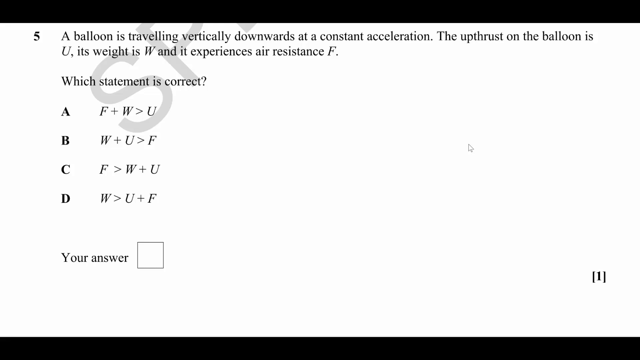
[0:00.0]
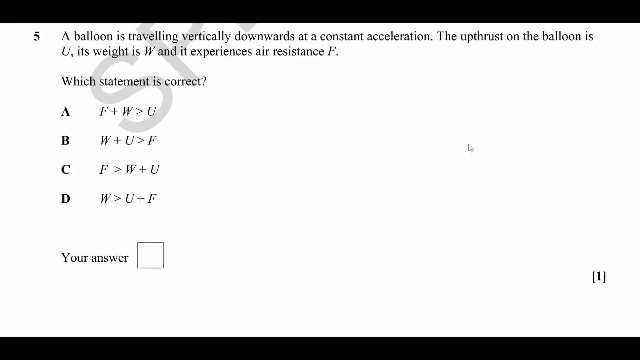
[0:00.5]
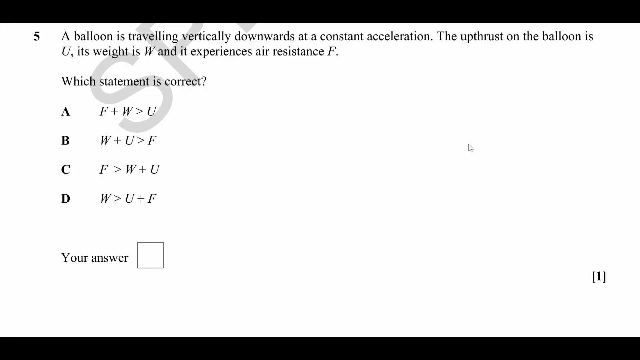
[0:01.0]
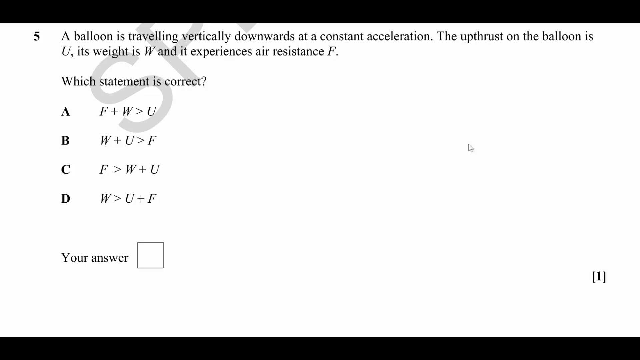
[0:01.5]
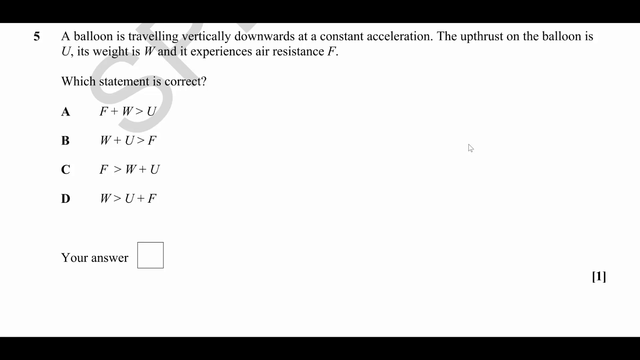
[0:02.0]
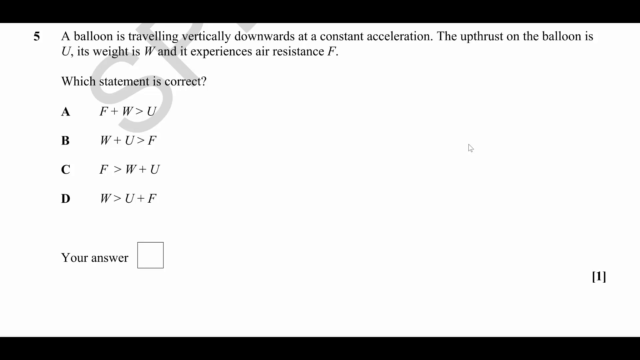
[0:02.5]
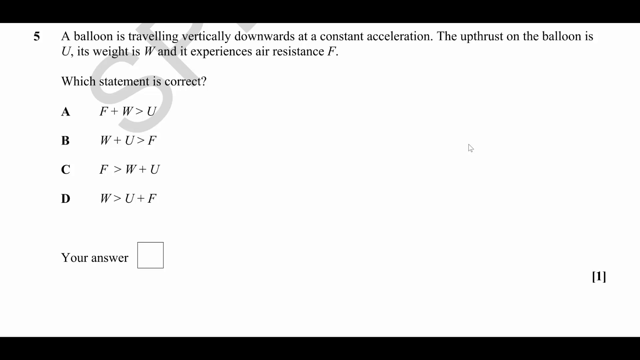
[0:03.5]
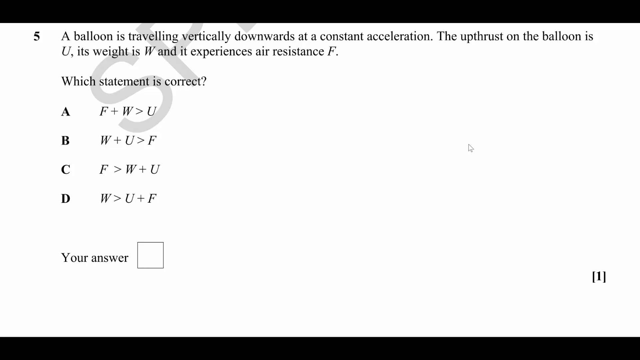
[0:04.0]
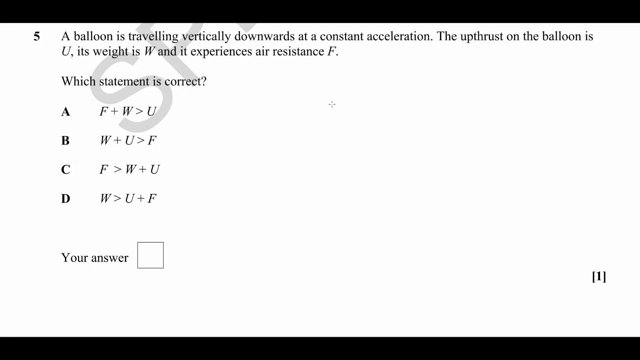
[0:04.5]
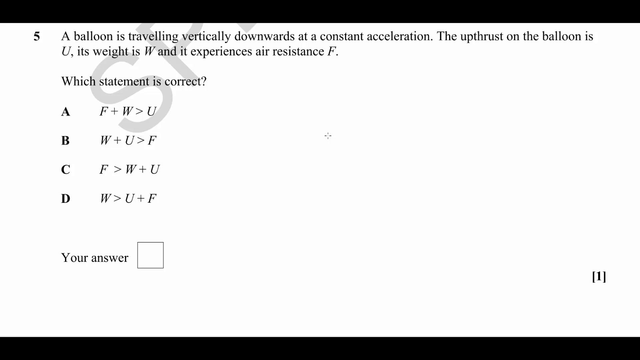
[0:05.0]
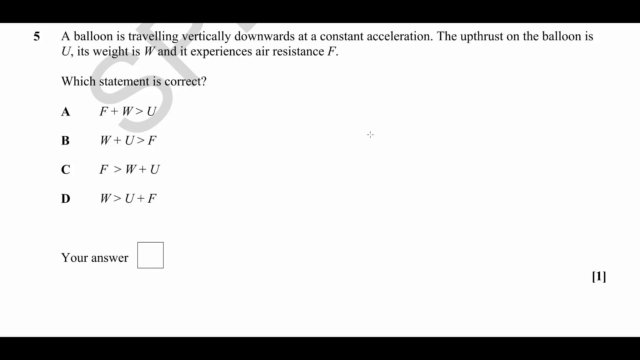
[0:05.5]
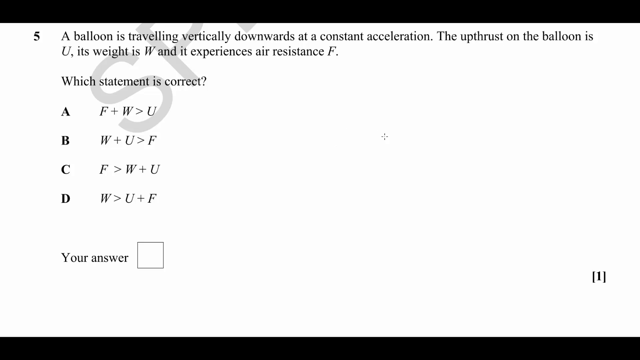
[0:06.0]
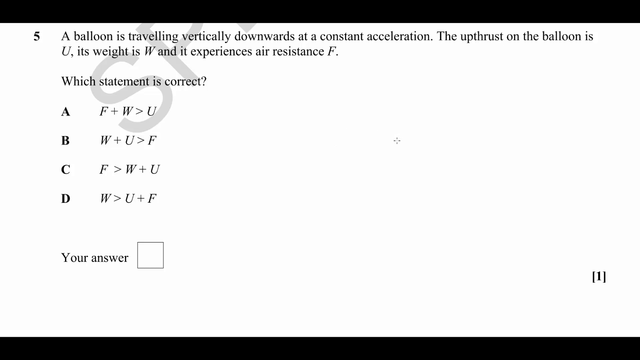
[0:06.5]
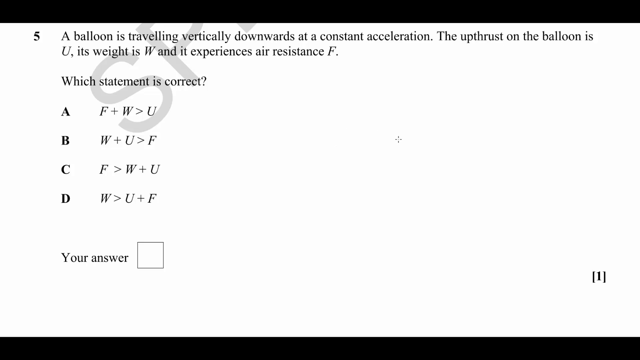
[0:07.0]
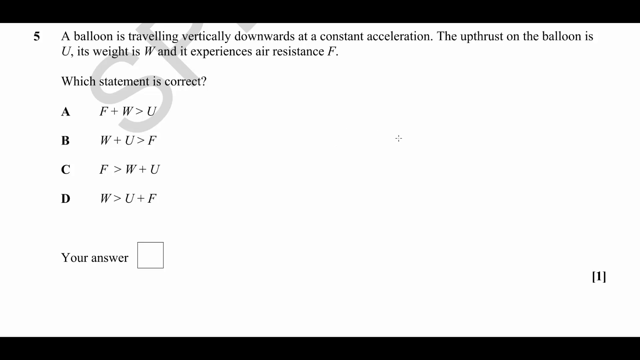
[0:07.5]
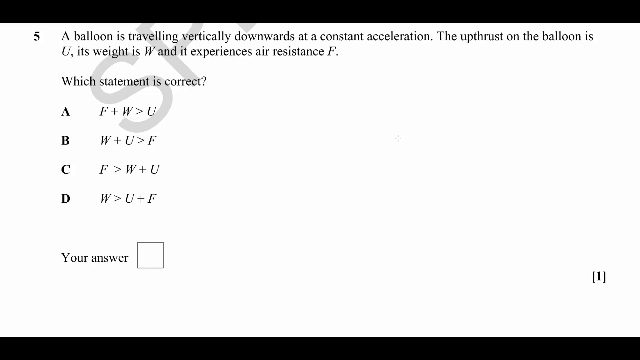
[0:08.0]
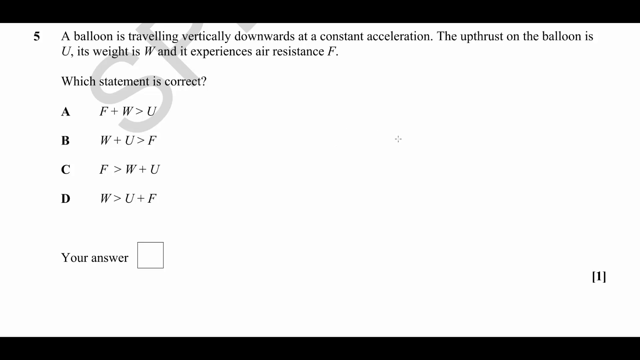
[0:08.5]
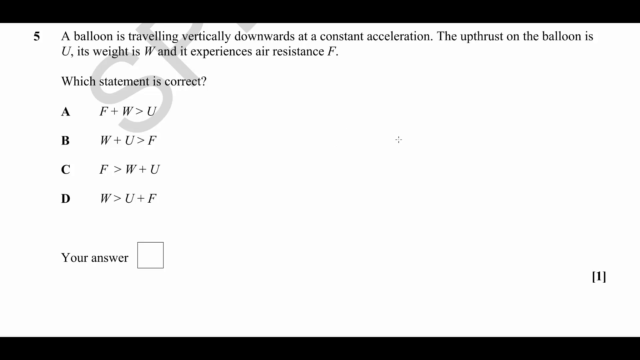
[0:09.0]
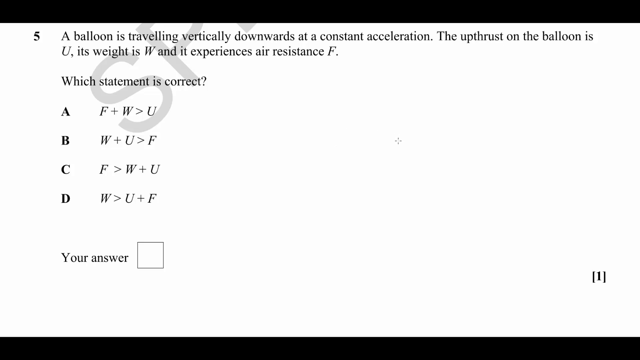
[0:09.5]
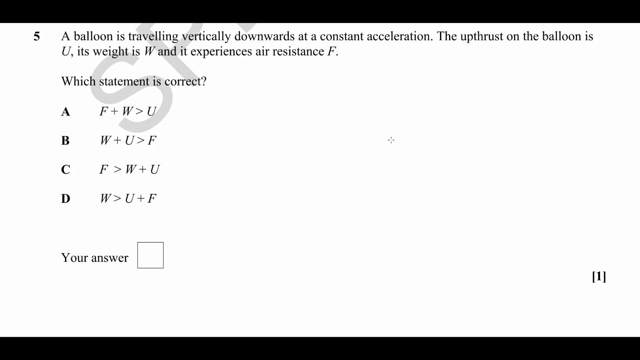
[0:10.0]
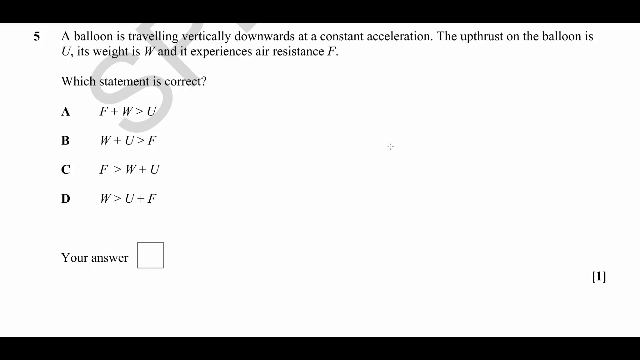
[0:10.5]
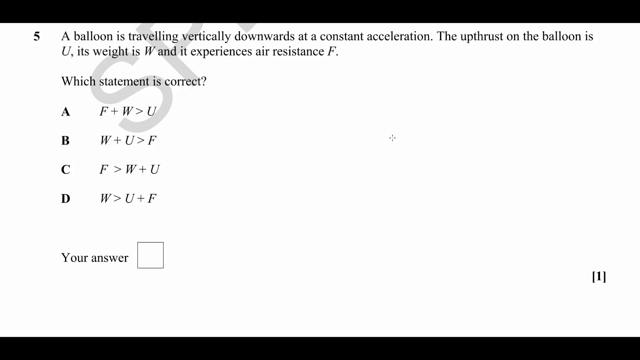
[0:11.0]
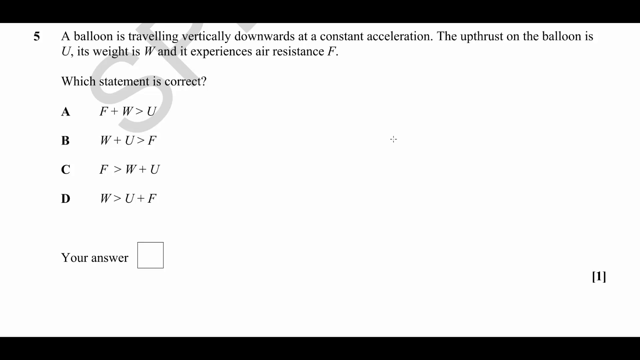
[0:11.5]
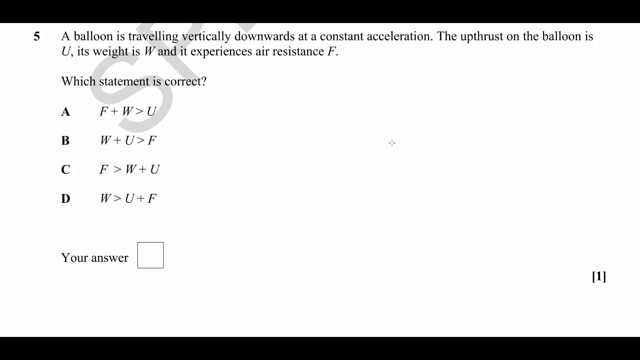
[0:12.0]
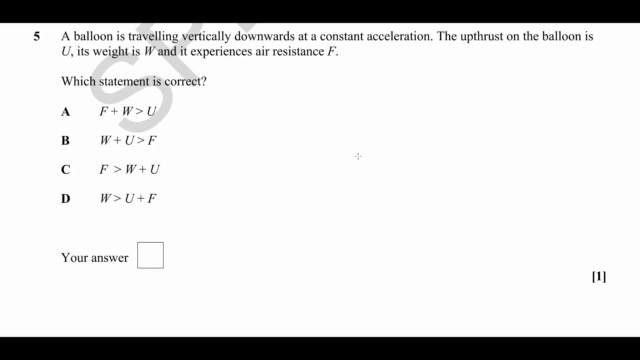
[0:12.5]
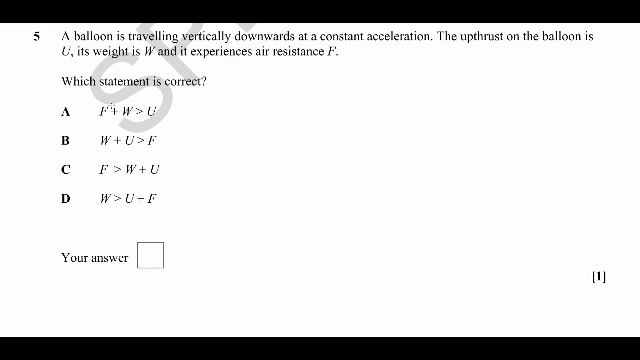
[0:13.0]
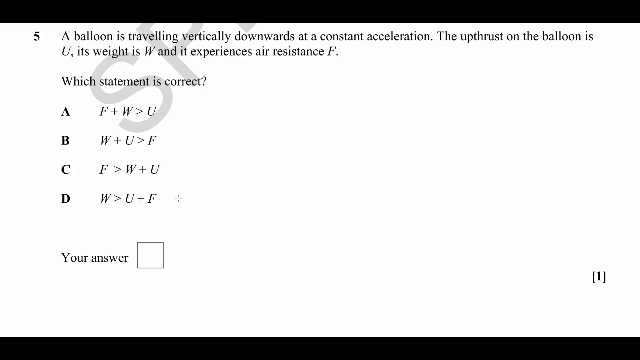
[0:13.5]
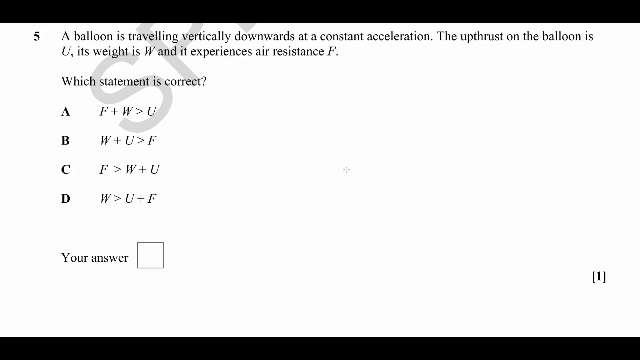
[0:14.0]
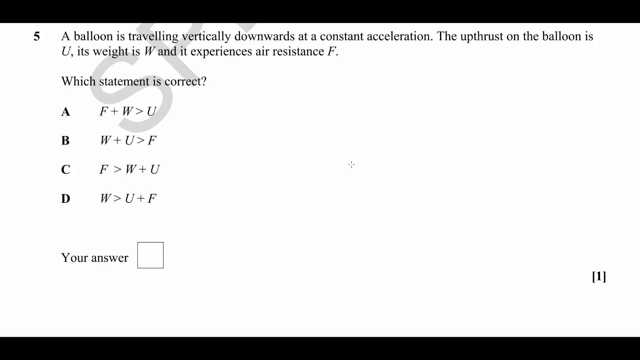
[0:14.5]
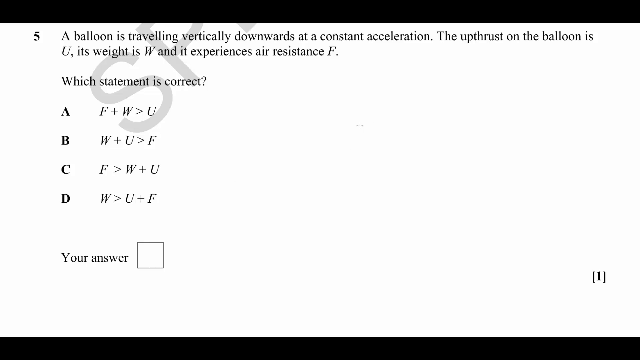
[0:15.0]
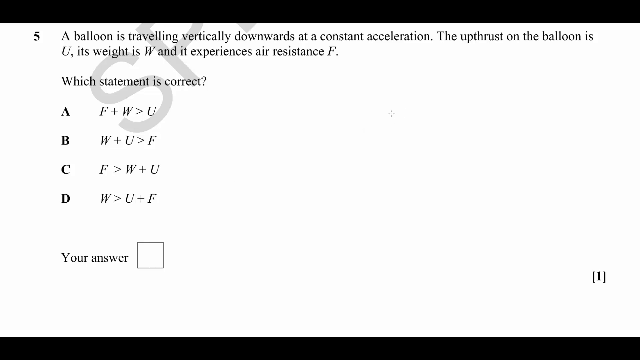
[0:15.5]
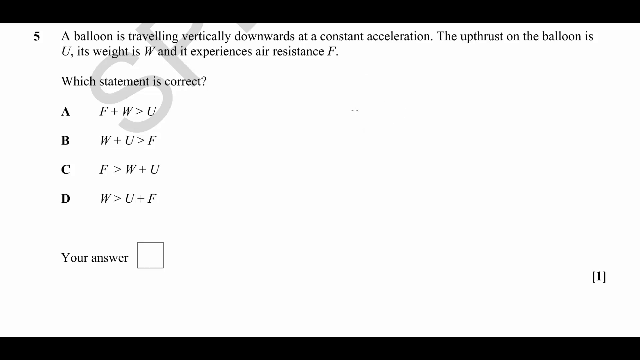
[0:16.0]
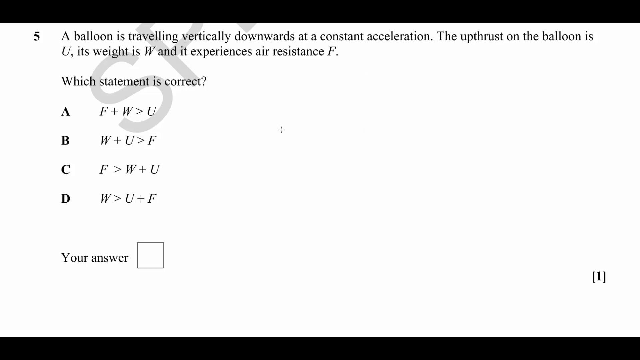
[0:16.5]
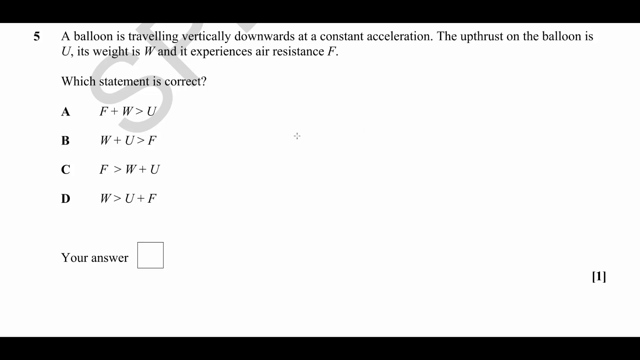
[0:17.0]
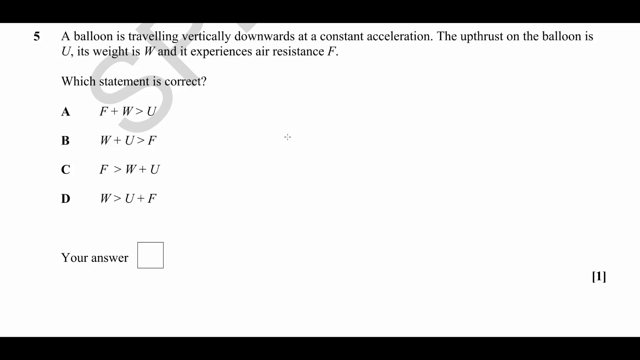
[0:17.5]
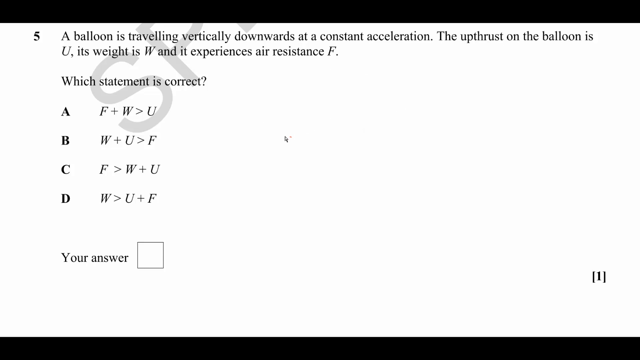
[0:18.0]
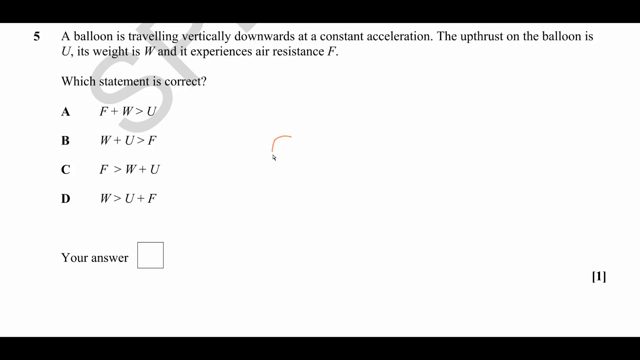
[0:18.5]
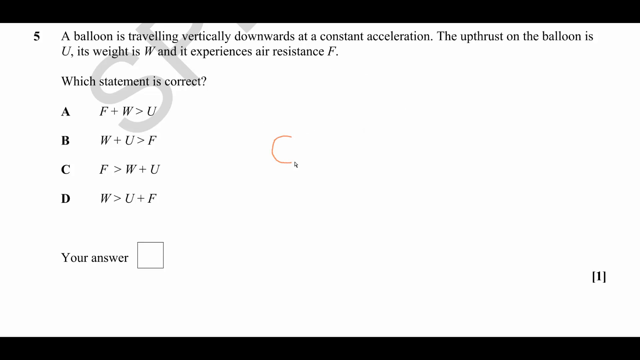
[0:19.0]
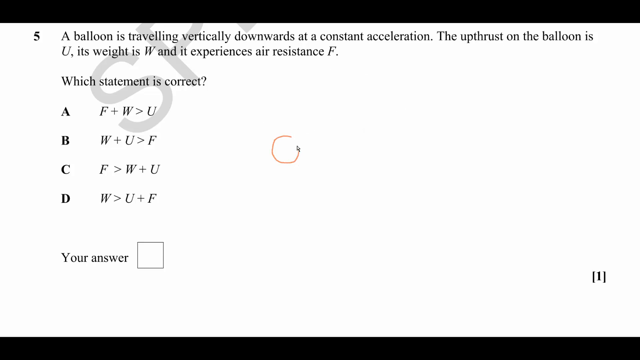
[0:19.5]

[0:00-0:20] A question, identified as question number five, appears on a computer screen. Behind the question, the letters "SP" are written on an angle in large text and get cut off, but they are see-through so the question can still be clearly seen. The question is about a balloon traveling vertically downwards at a constant acceleration, and it gives information on the balloon's upthrust, its weight, and the constant for its air resistance. It asks which statement is correct, and there is a place to fill in the answer. A mouse cursor moves around the page somewhat erratically, seeming to highlight or circle sections of the question as if the person is explaining, and then draws a small circle in the white space beside the four potential answers.